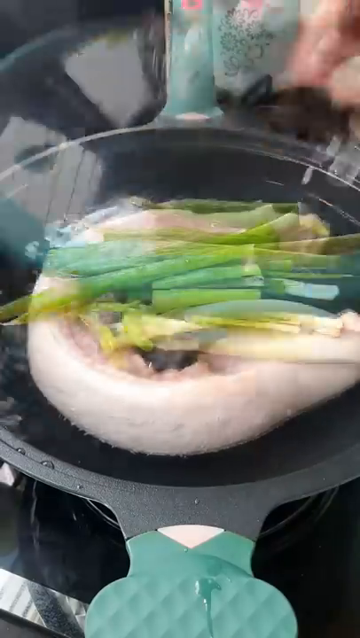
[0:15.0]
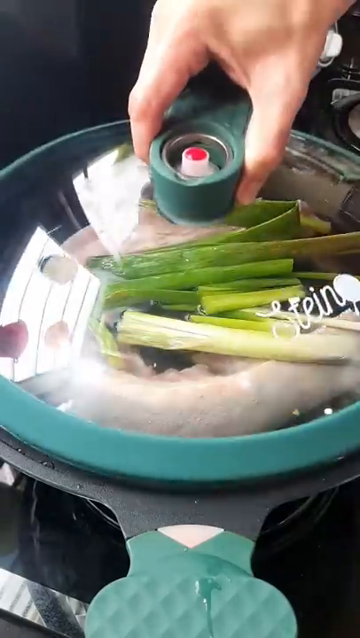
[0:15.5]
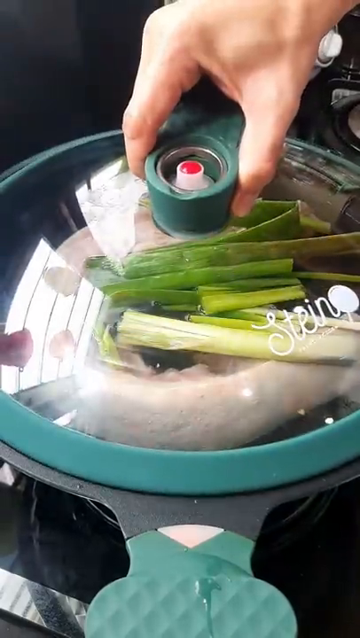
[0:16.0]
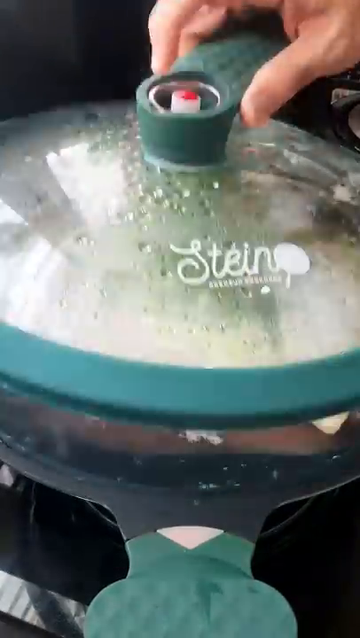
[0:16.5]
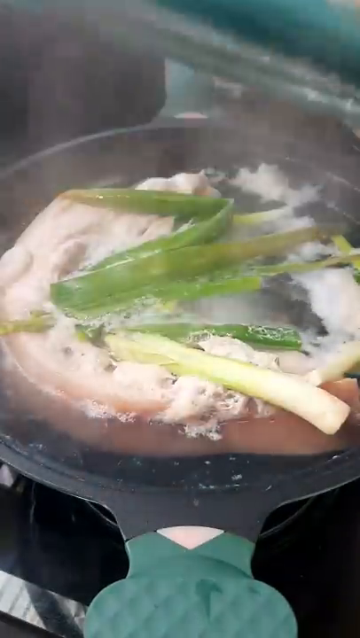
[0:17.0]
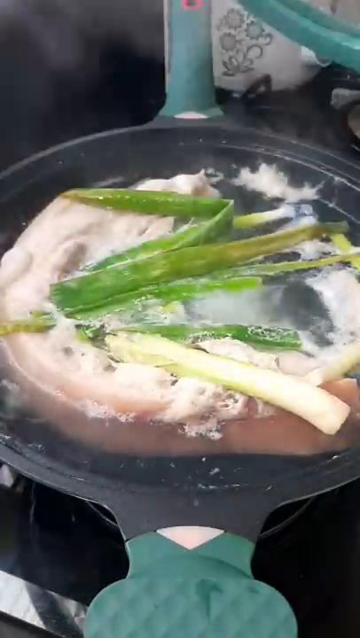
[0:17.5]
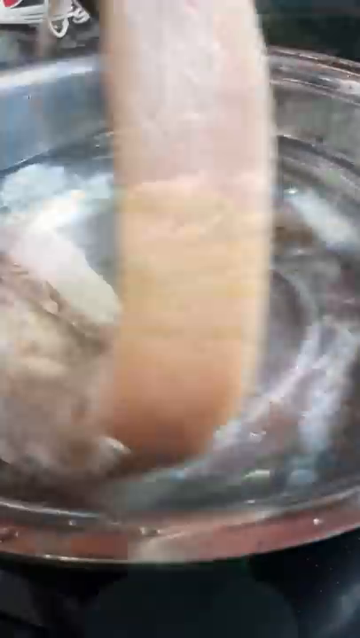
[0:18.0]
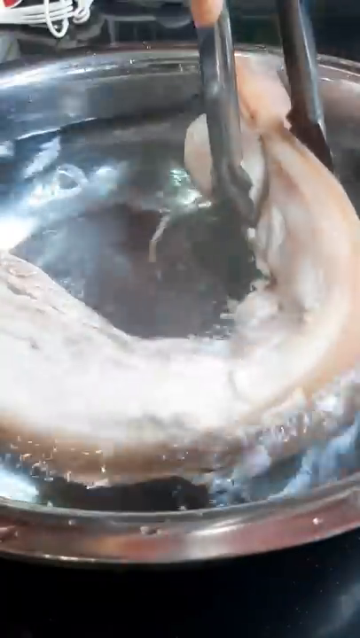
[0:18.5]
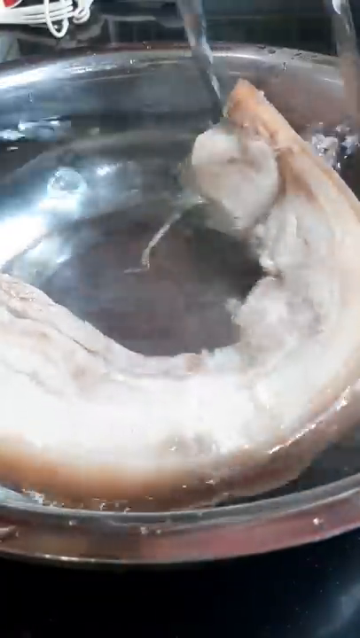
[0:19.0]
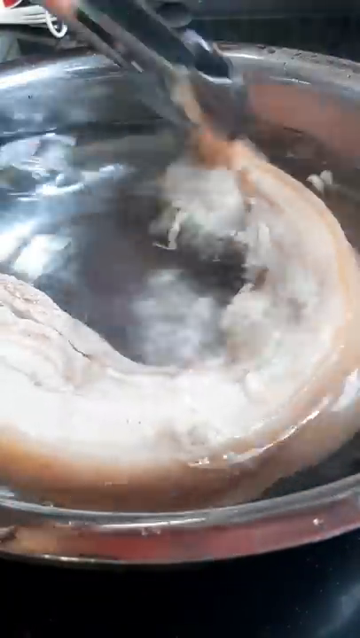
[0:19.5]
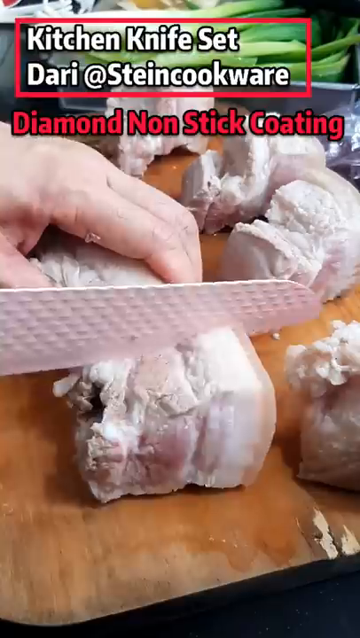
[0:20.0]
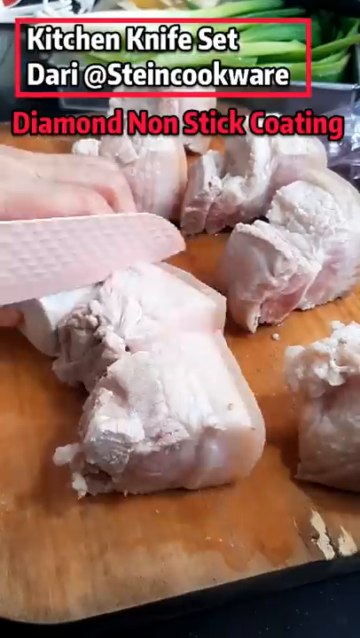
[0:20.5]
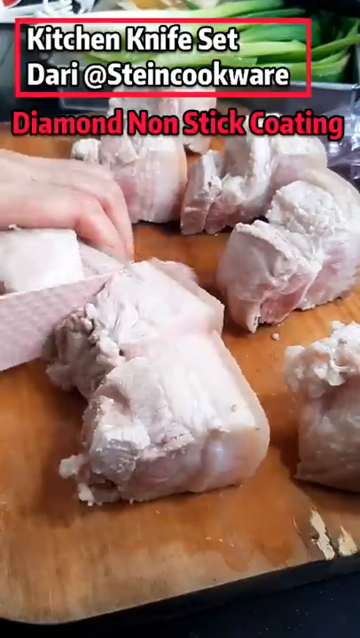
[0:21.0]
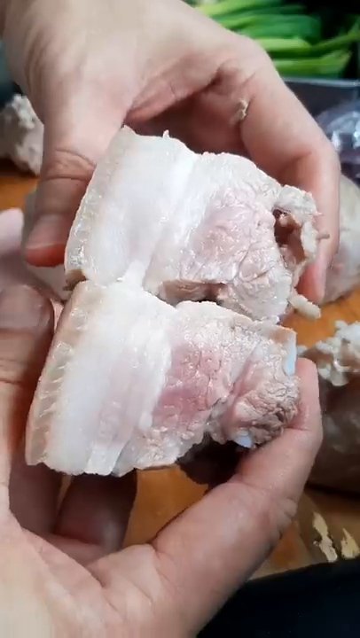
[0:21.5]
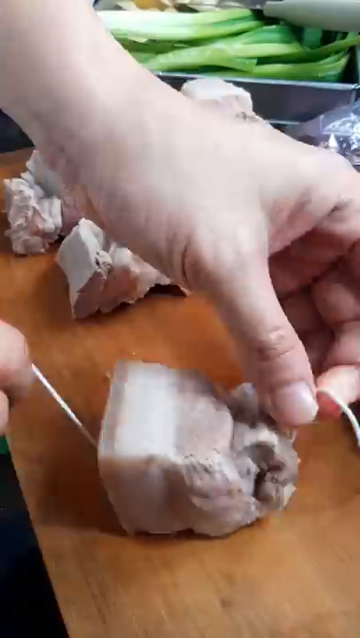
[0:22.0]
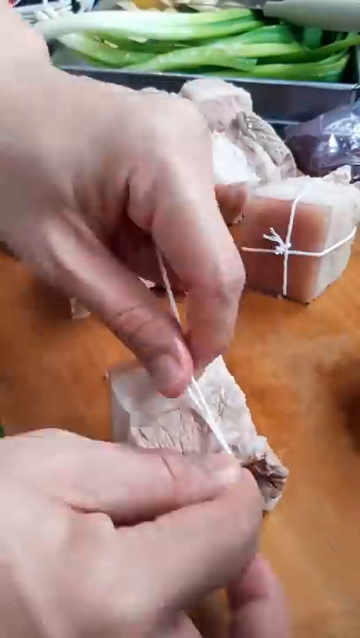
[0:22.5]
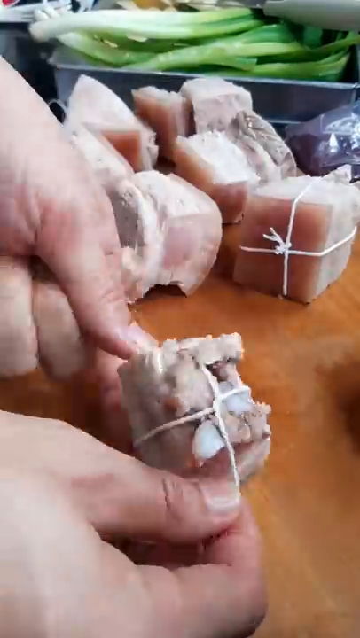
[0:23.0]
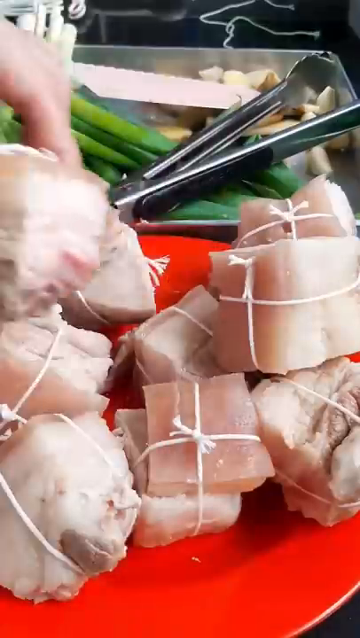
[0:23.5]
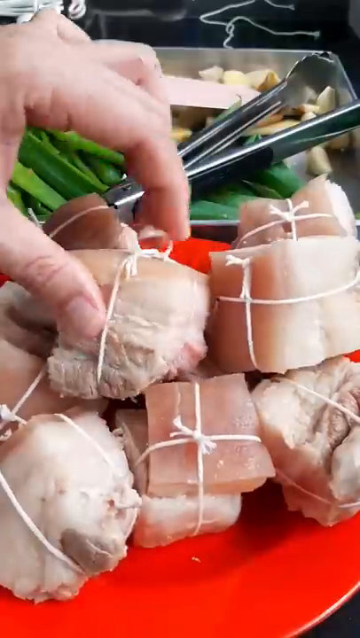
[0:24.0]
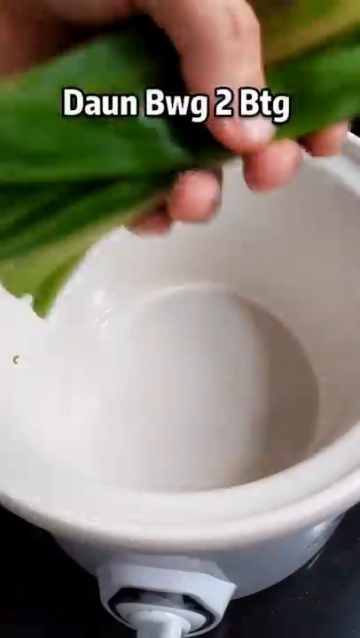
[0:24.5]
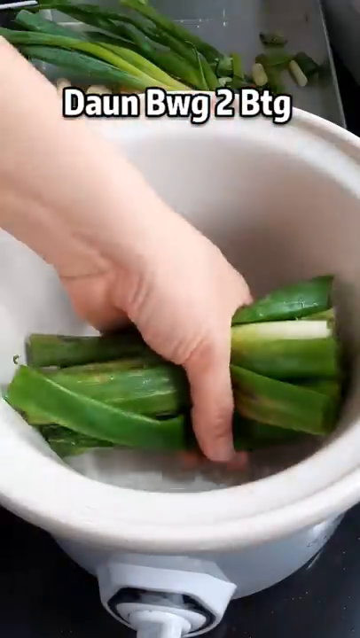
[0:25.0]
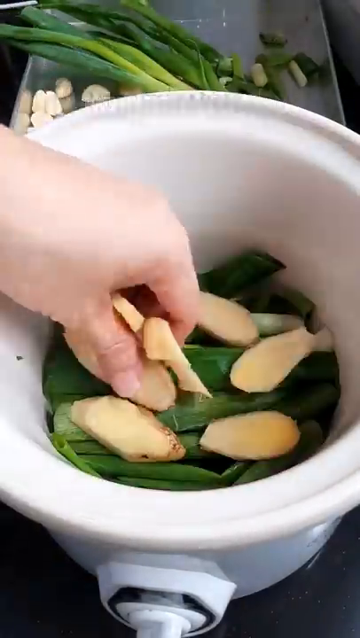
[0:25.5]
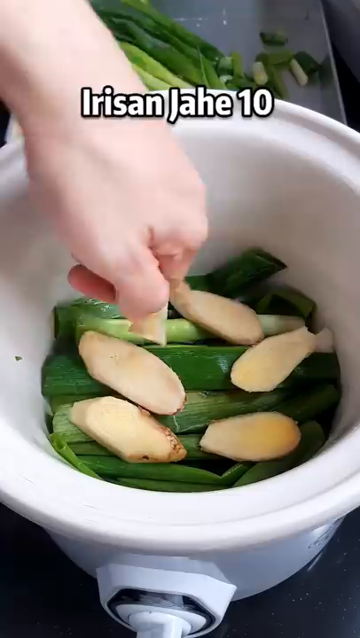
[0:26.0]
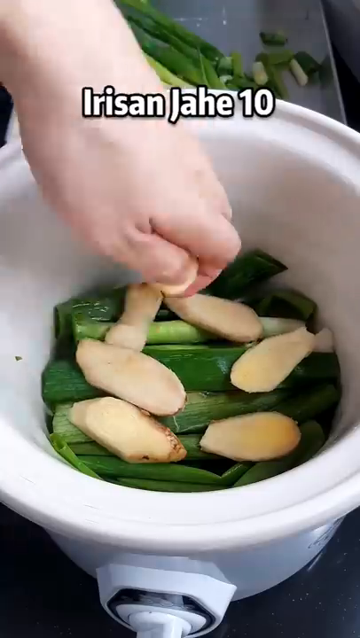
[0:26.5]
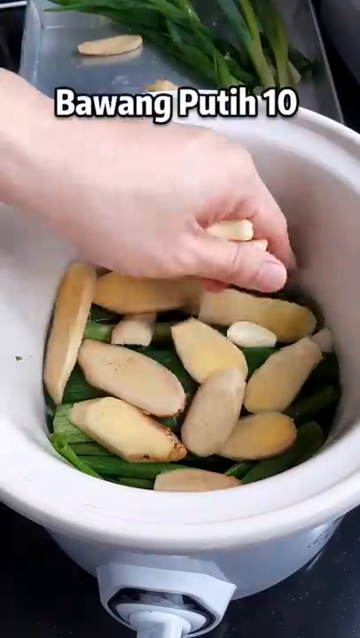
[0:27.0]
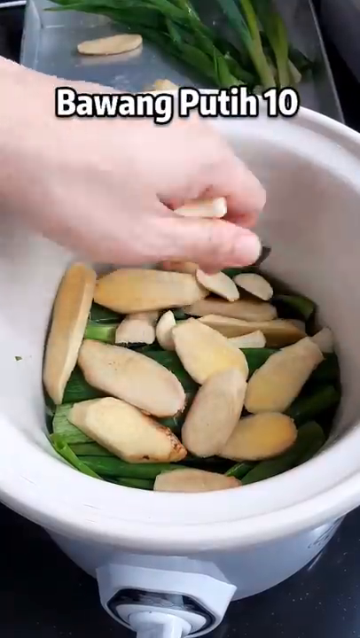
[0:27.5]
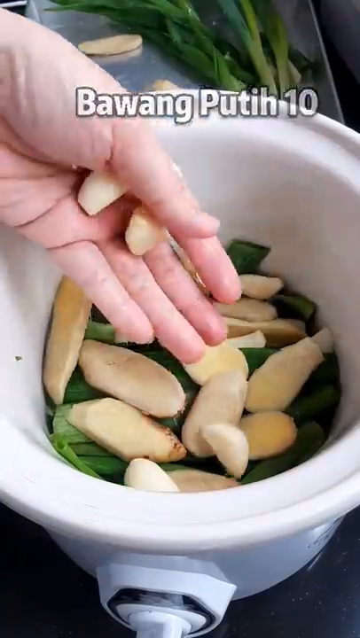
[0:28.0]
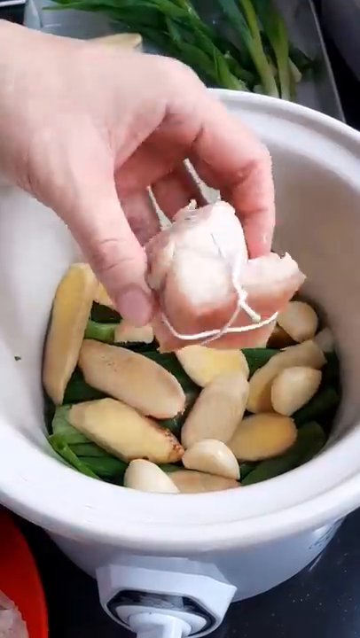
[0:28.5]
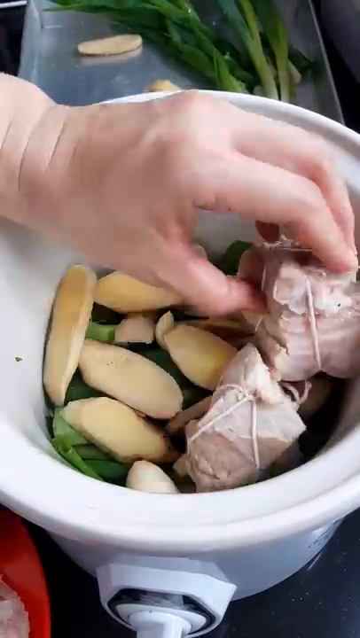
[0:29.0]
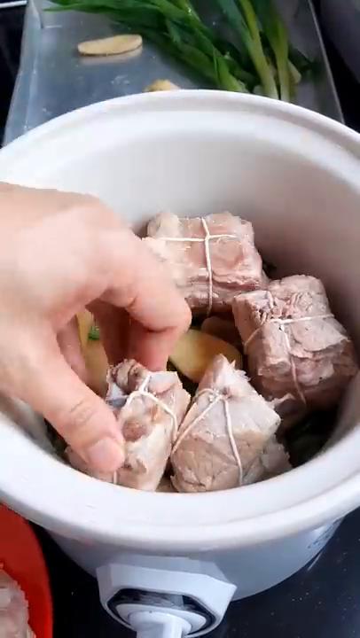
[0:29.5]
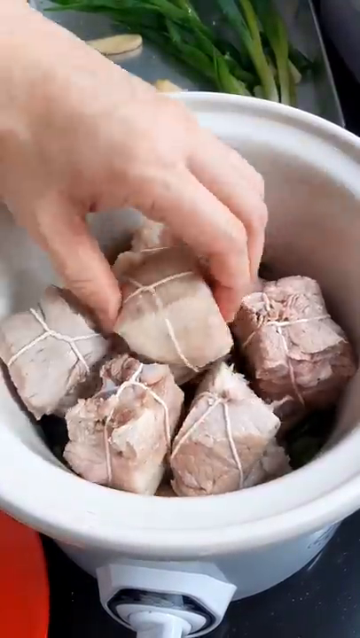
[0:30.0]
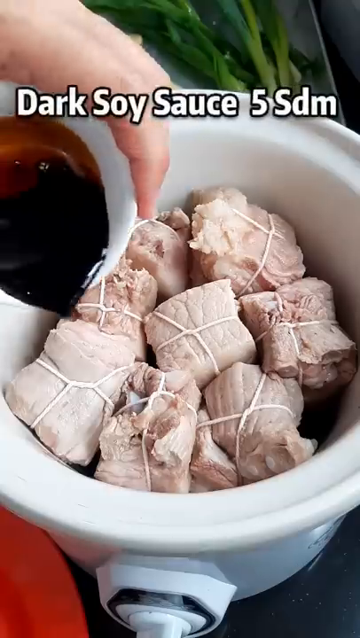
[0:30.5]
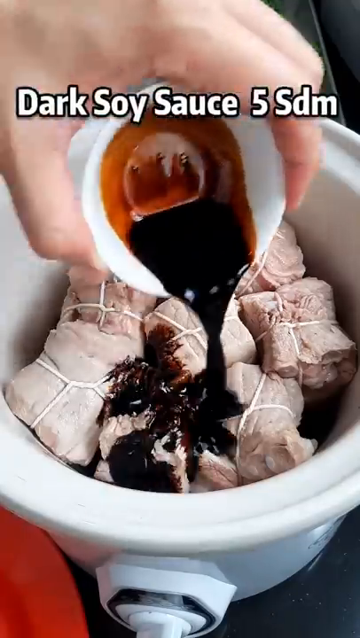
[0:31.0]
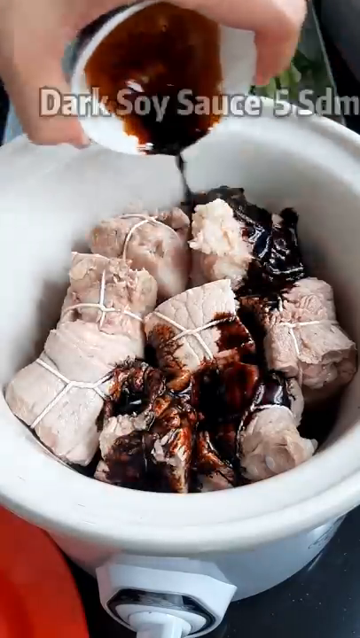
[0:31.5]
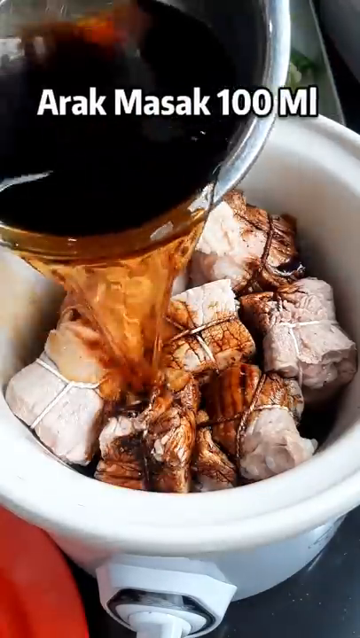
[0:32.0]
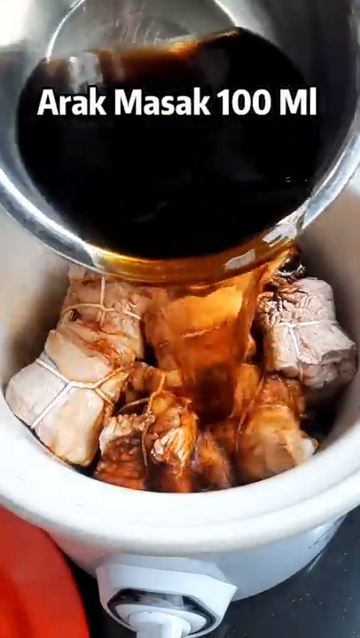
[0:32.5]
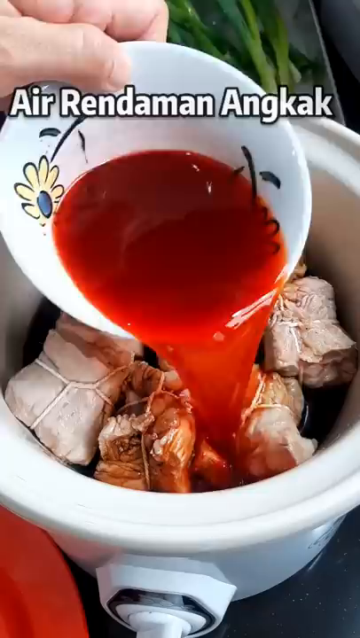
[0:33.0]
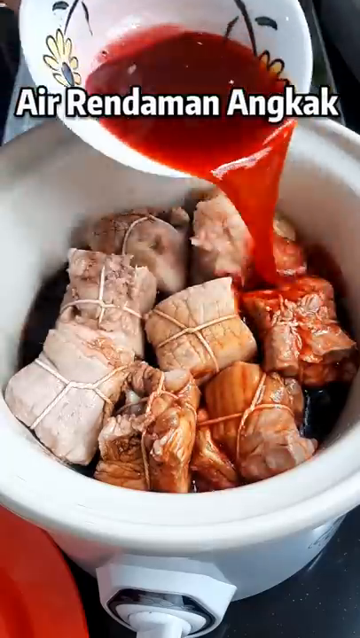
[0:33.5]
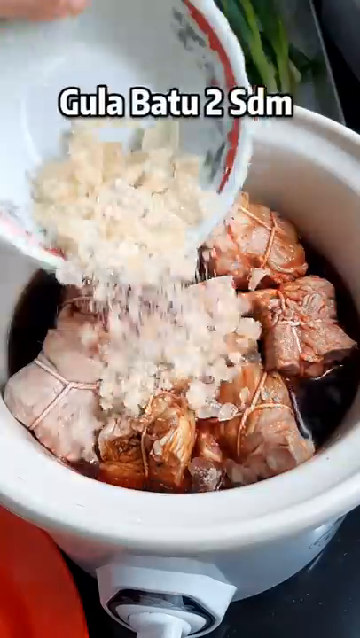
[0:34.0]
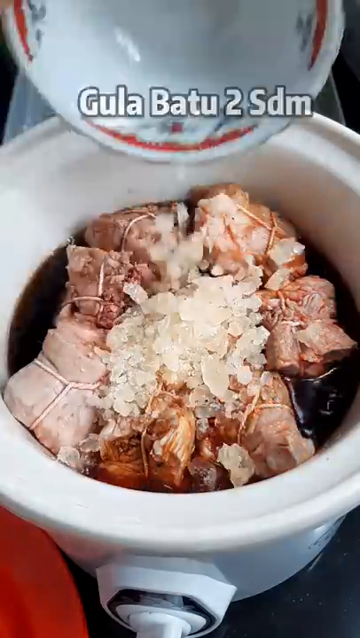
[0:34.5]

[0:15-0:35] The man boils the pork belly with chives, spring onion and ginger, and possibly garlic, in a green-blue pan or pot. He steams it, then puts it in water, cuts it into big pieces, and ties each piece up with string. He then makes the steaming base, starting with green onion, ginger and garlic. He adds dark soy sauce, fish sauce, 100 milliliters of an unidentified ingredient, and some red spicy sauce, followed by what appears to be rock sugar. Then he cooks it.